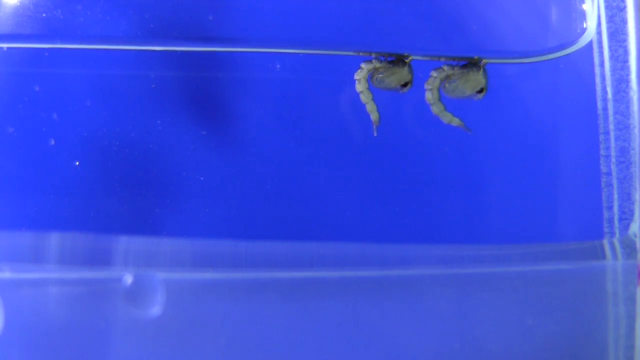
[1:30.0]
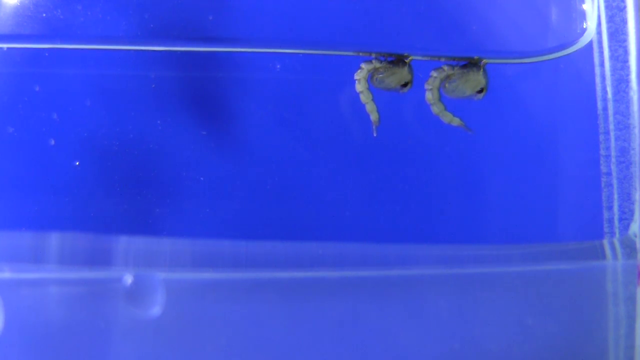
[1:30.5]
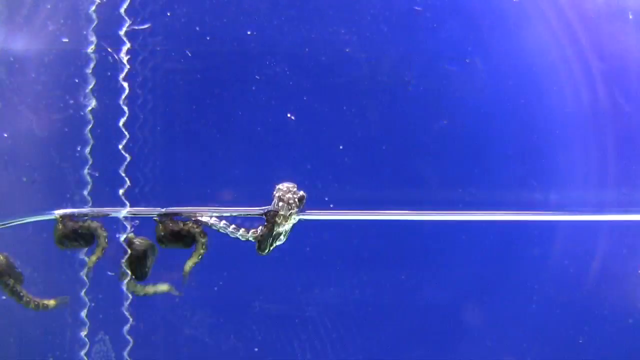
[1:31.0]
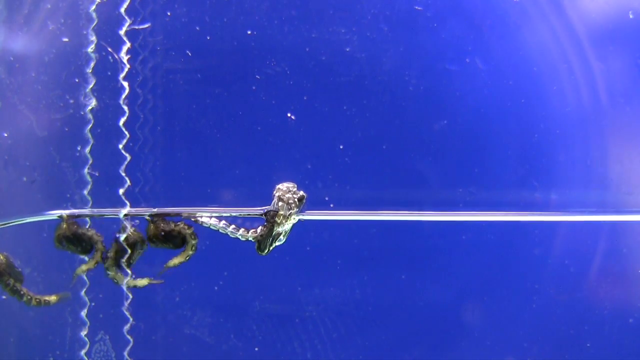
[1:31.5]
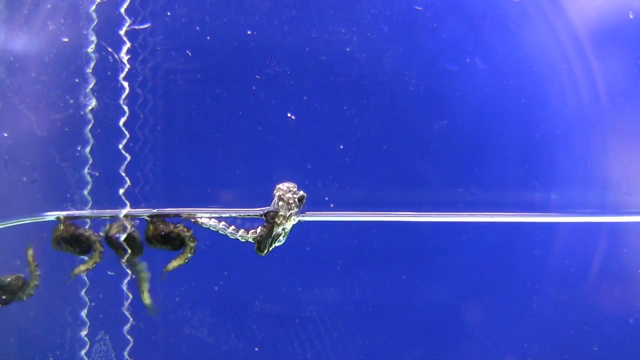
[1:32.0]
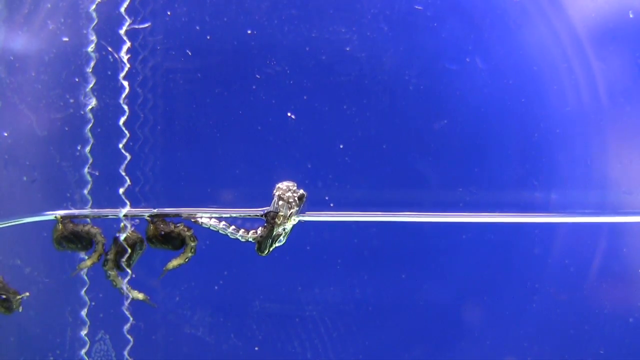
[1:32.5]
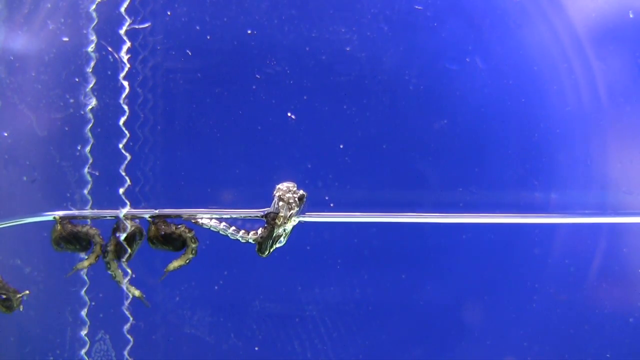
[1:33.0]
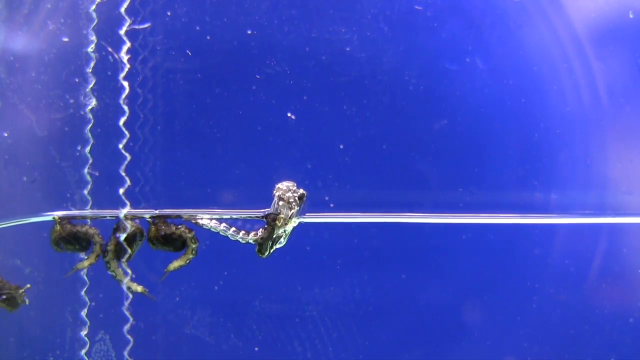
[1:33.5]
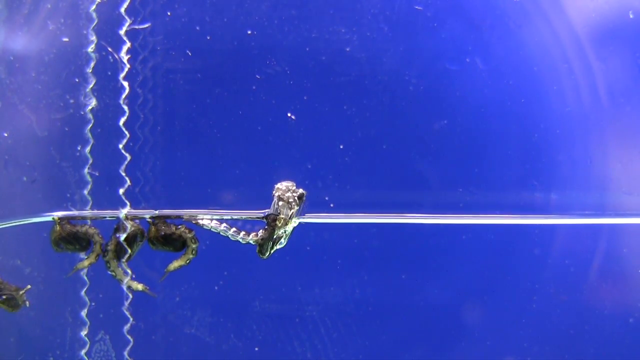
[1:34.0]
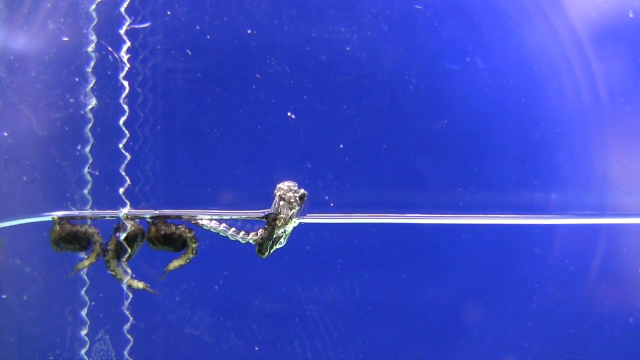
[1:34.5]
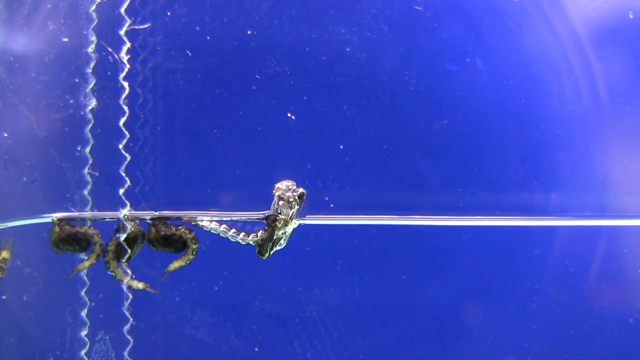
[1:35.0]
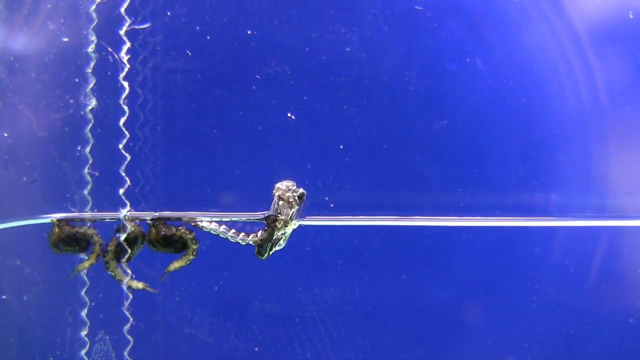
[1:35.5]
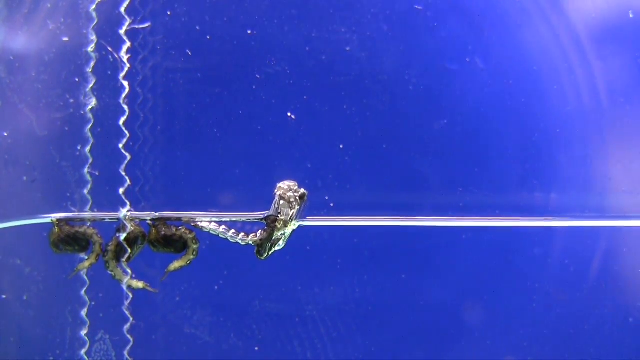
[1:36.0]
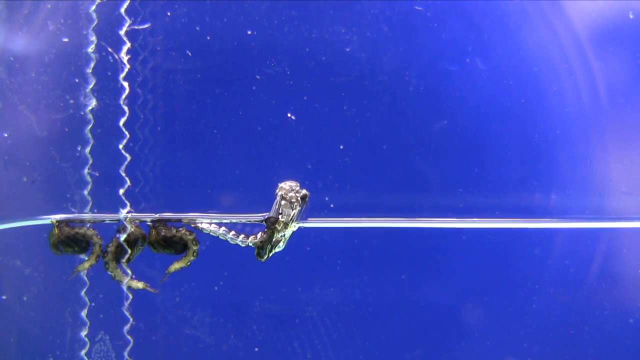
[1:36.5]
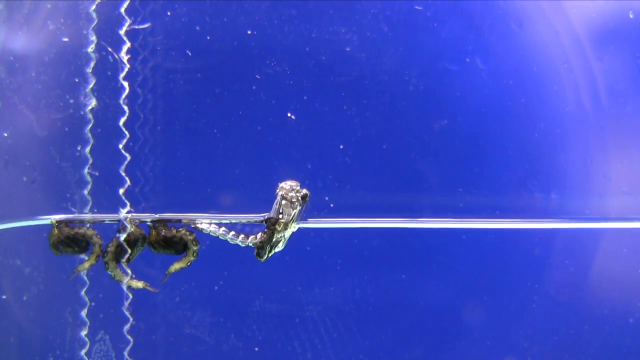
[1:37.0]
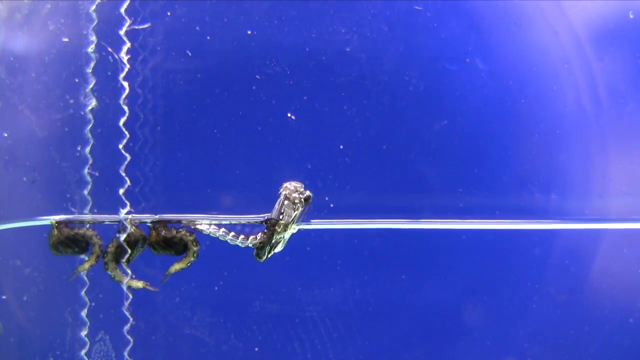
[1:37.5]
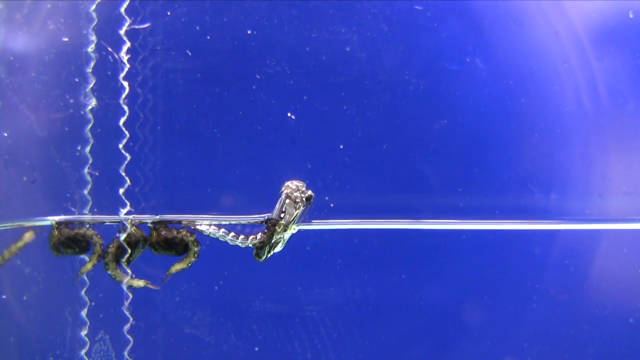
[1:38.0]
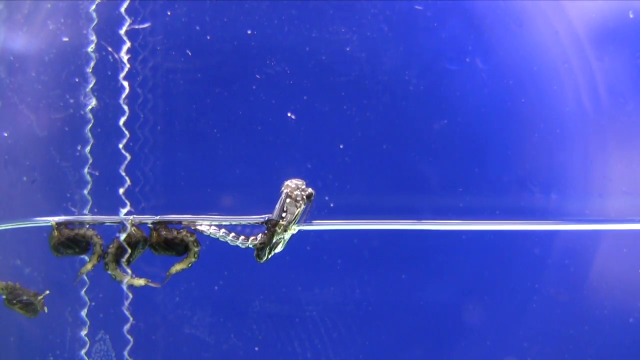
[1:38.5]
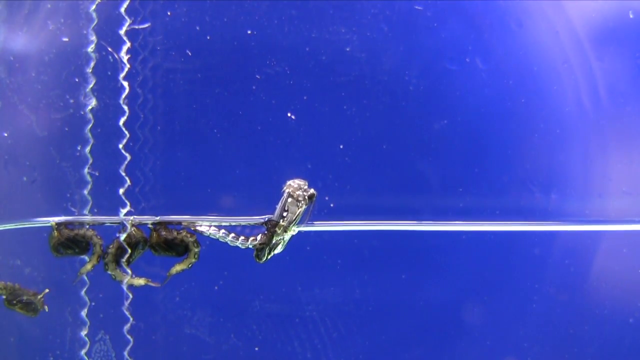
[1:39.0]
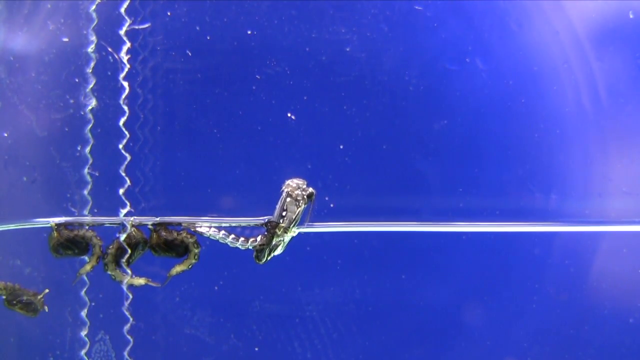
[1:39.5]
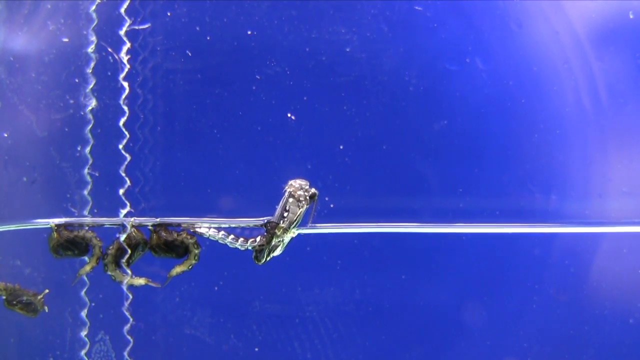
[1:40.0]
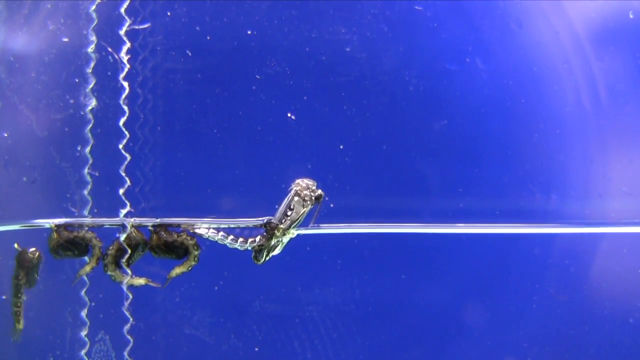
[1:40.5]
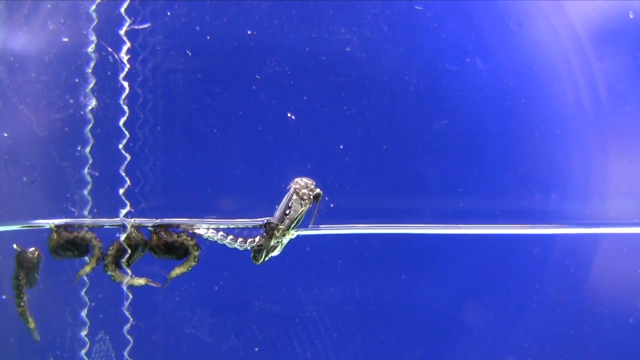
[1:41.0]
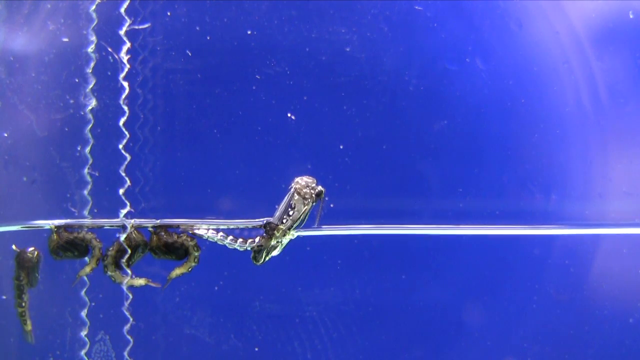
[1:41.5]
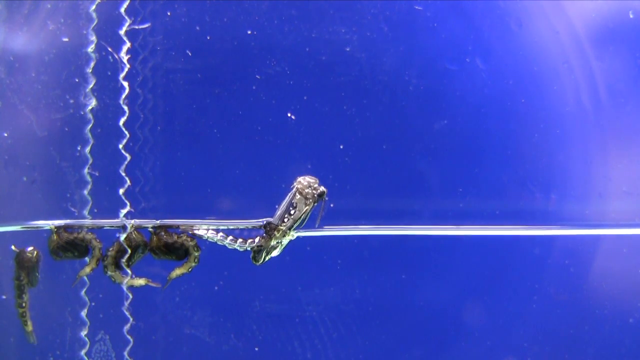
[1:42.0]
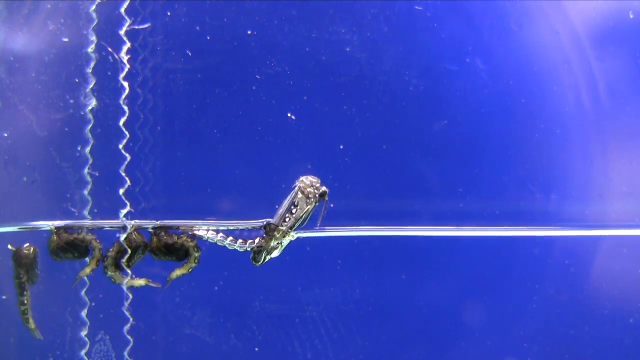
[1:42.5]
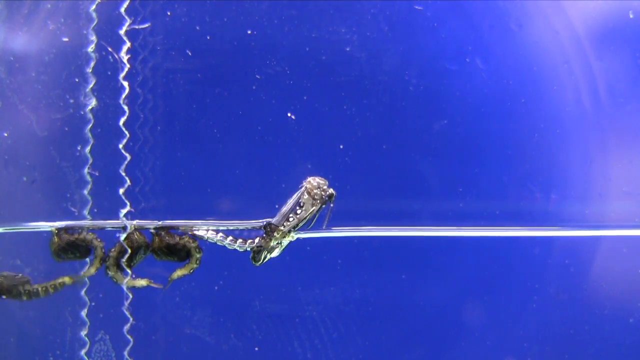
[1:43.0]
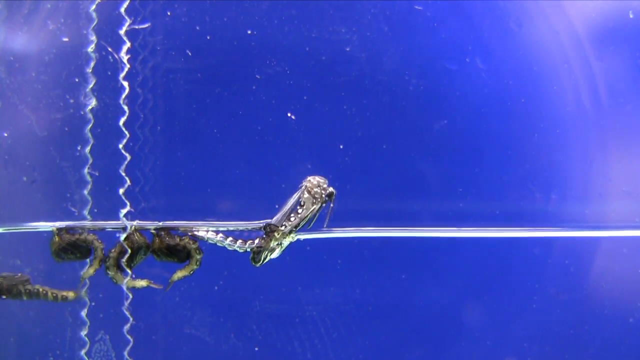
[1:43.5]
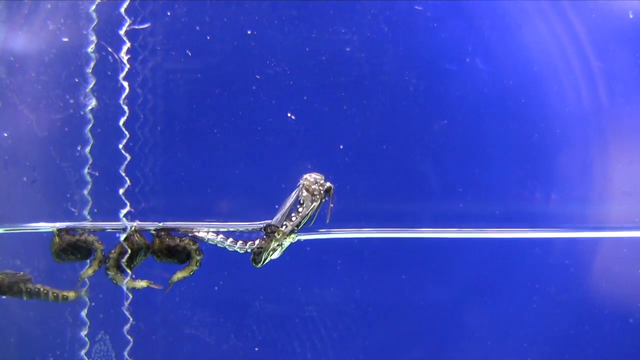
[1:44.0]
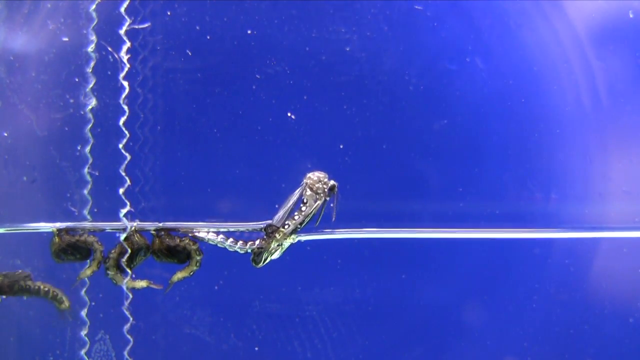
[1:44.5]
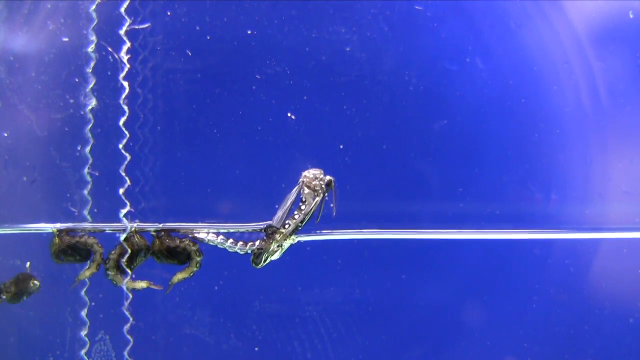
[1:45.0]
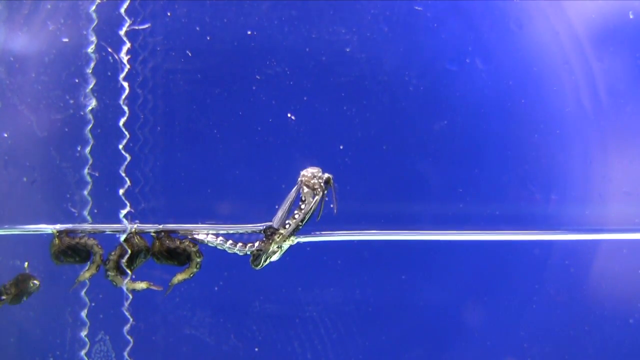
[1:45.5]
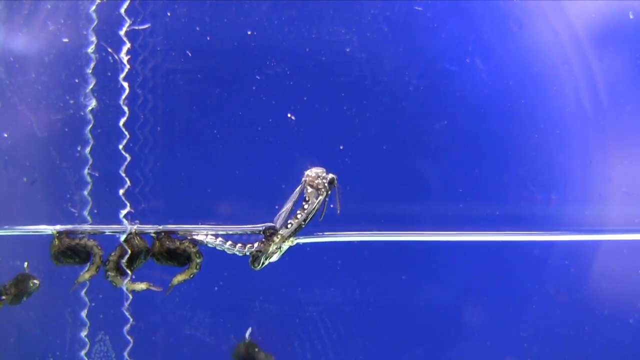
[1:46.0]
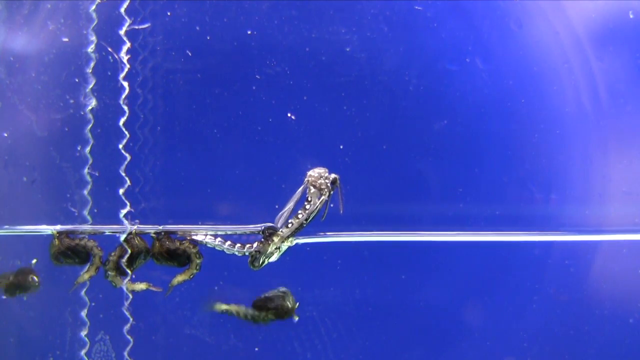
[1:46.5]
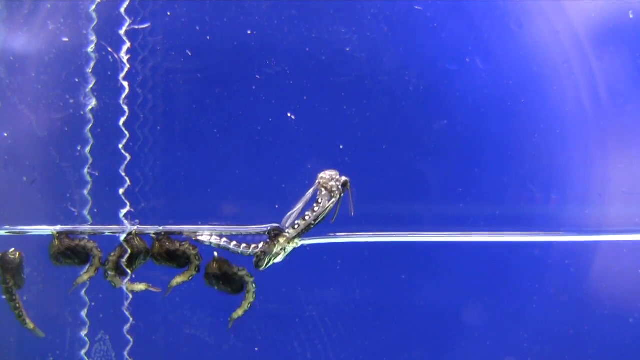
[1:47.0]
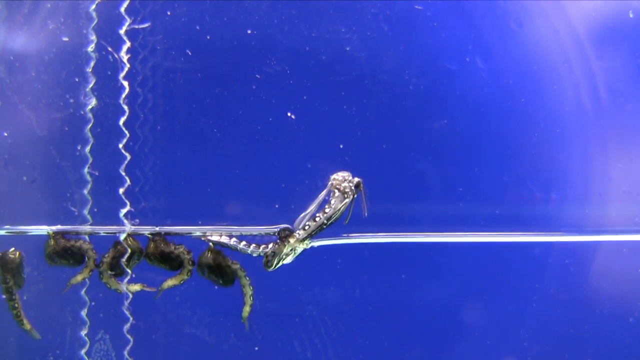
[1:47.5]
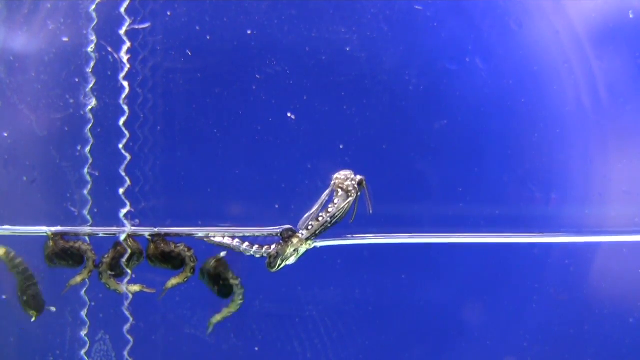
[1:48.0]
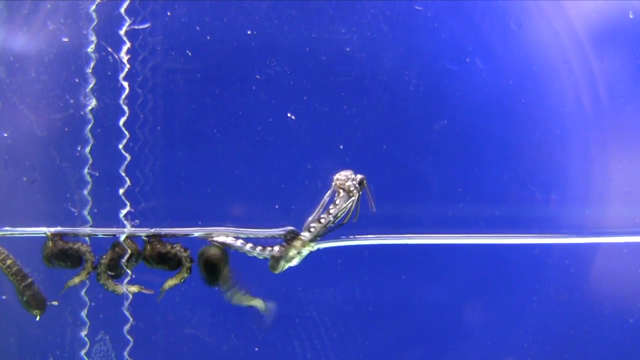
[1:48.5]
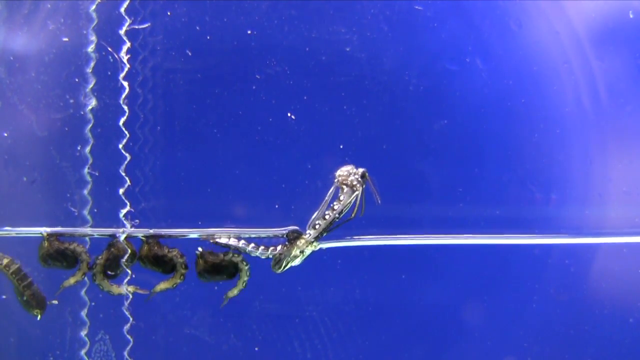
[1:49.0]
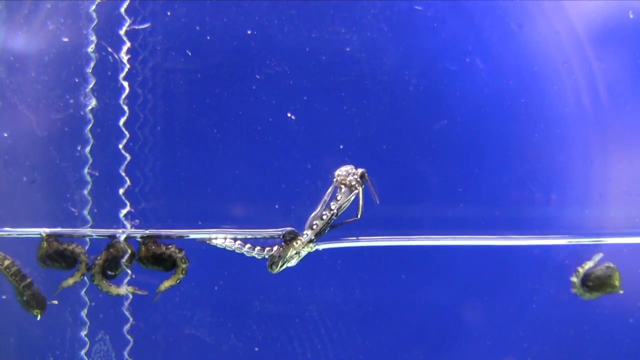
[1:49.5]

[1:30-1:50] The two worms are joined by two more, in water in a blue container, and some swimming is happening. A fifth worm is apparently appearing, but not clearly and not fully in the picture. The third worm is morphing into something like a locust; it looks like it is morphing into the next stage and is trying to maneuver out of the stage it was in. Two strips appear horizontal and one is vertical, and the morphing worm is lying on top of the vertical one. The worms maneuver their bodies, swimming. The picture is crisp.